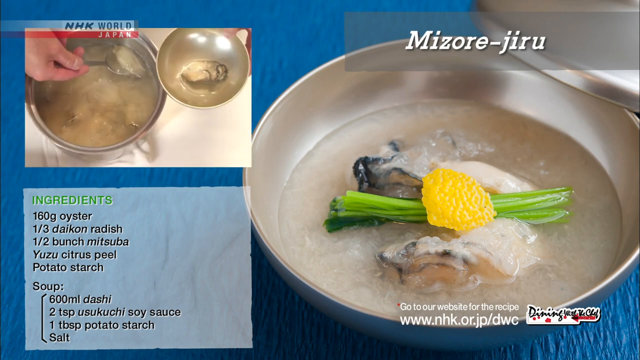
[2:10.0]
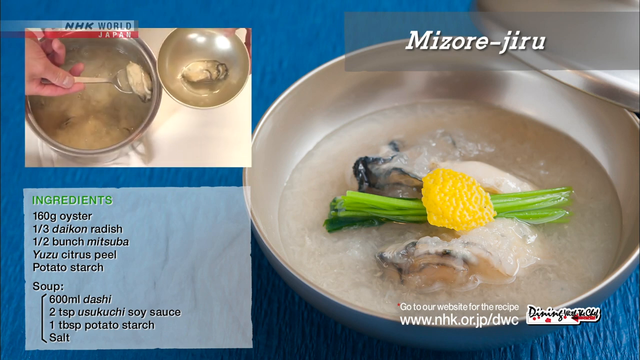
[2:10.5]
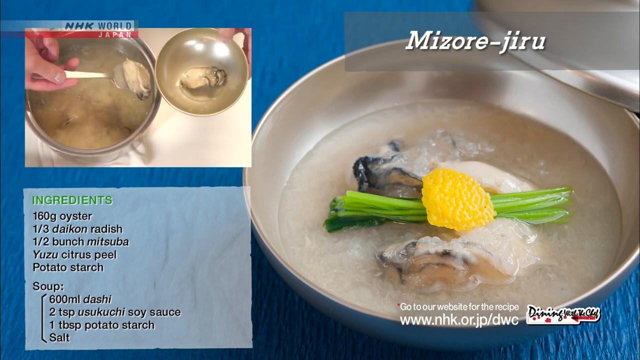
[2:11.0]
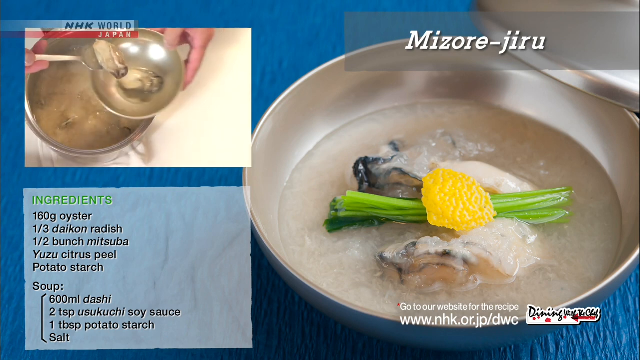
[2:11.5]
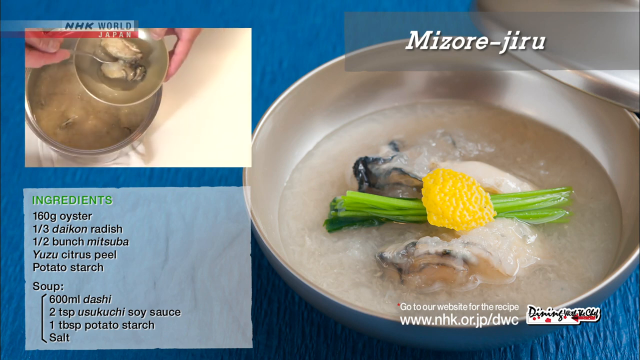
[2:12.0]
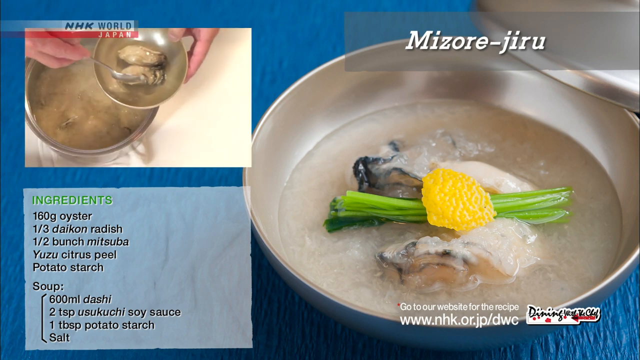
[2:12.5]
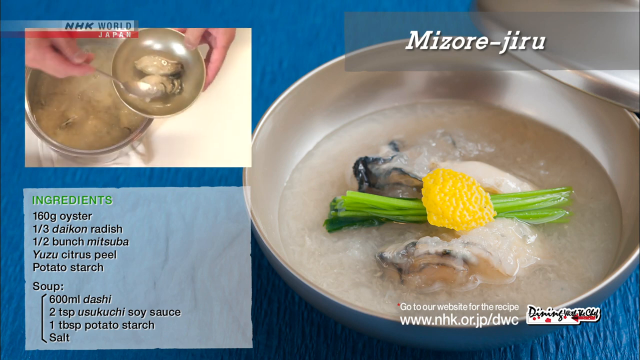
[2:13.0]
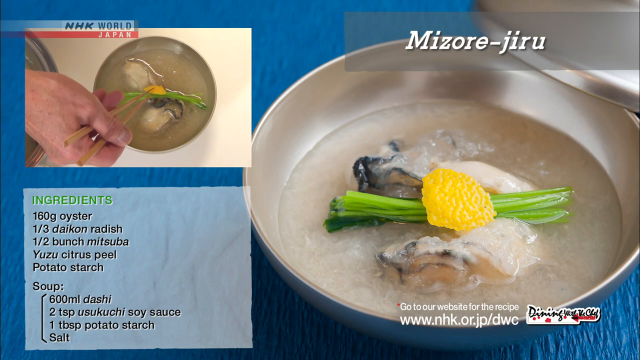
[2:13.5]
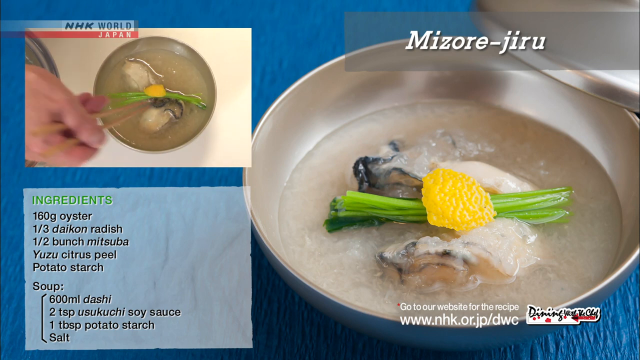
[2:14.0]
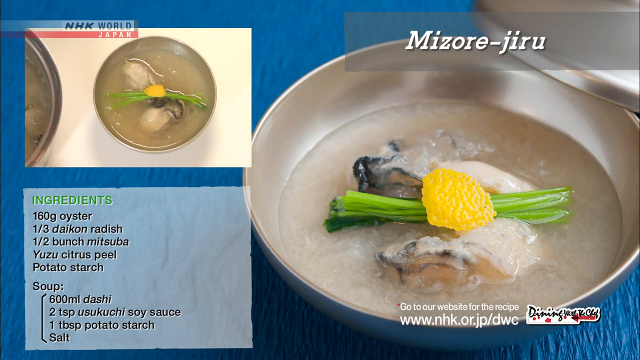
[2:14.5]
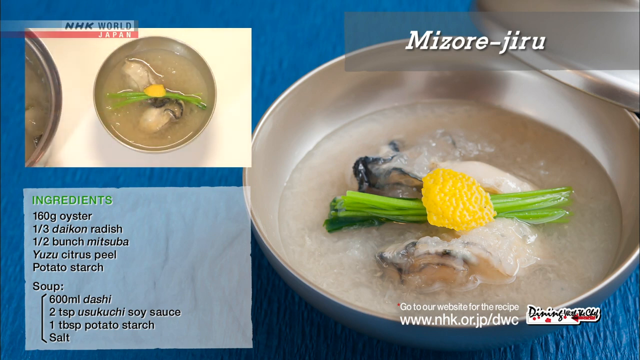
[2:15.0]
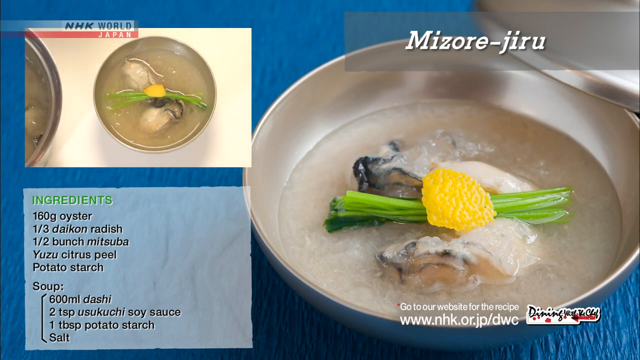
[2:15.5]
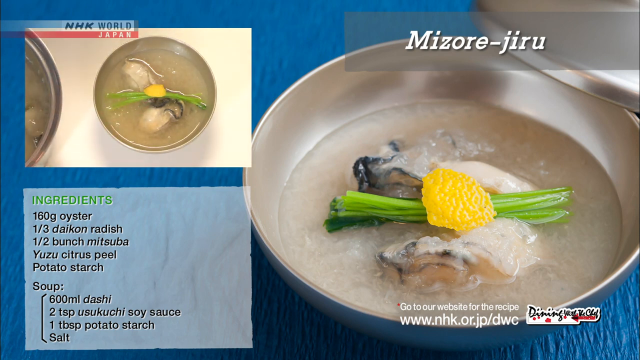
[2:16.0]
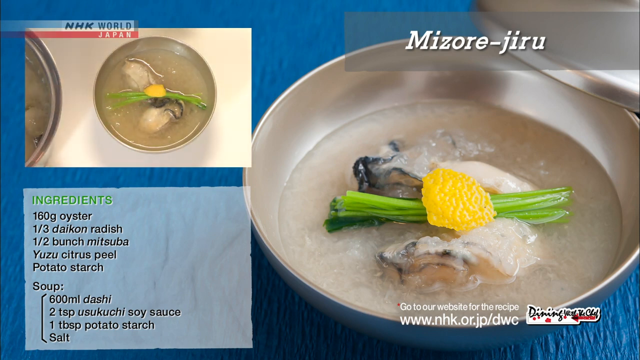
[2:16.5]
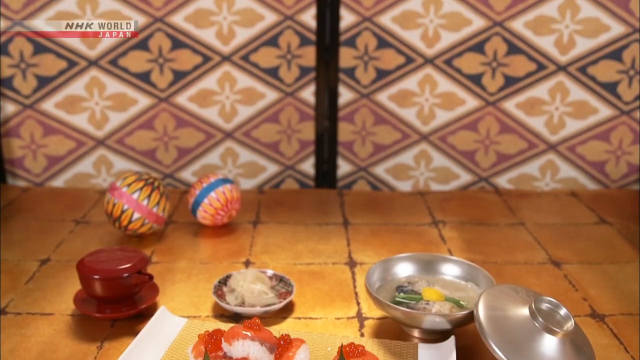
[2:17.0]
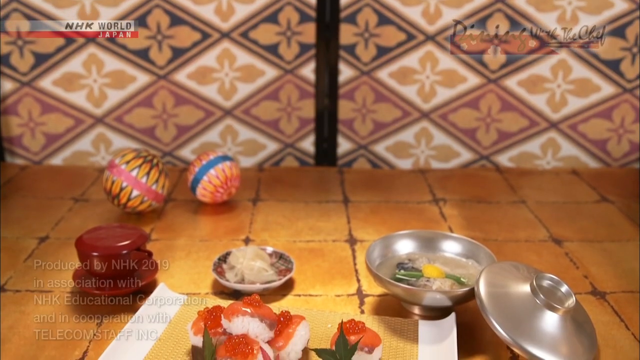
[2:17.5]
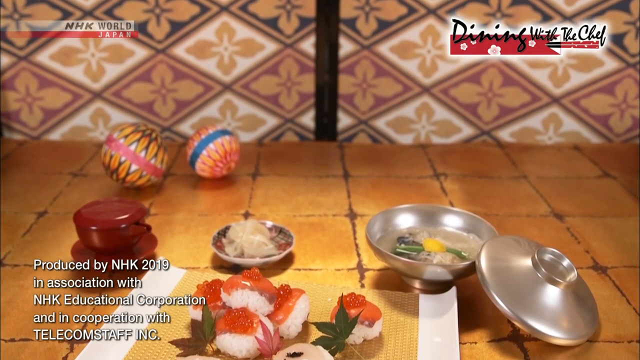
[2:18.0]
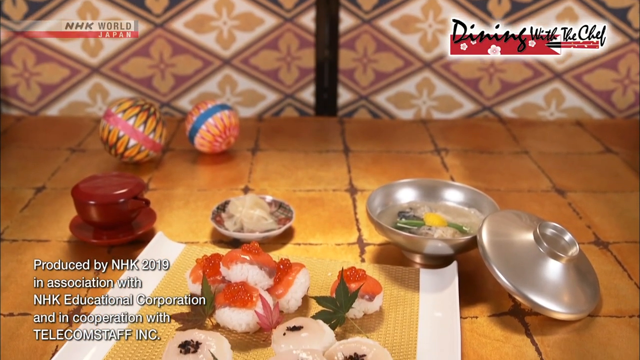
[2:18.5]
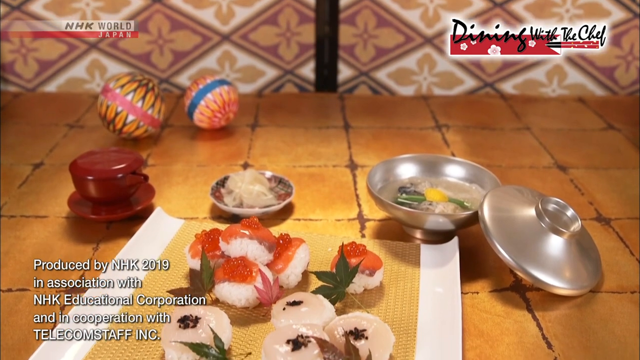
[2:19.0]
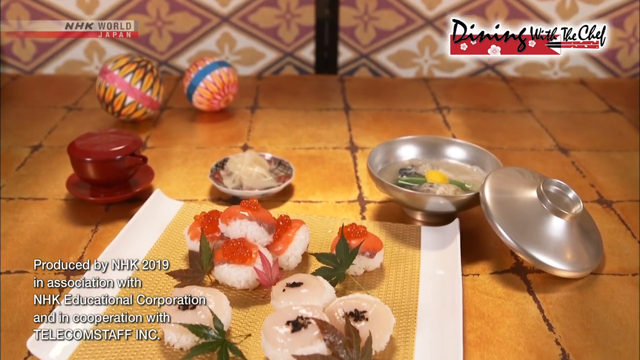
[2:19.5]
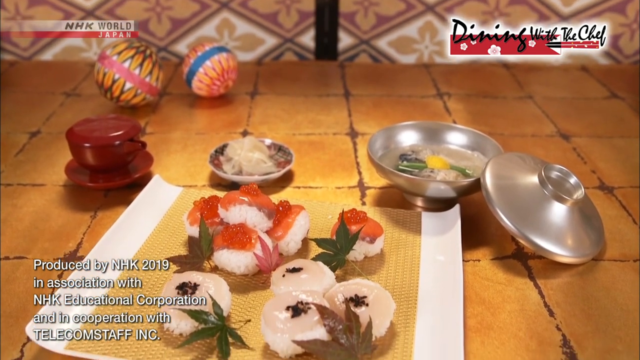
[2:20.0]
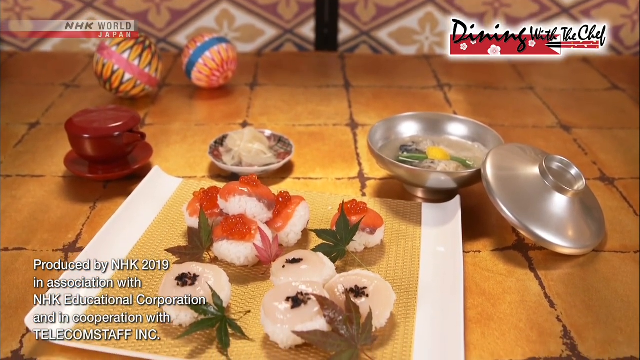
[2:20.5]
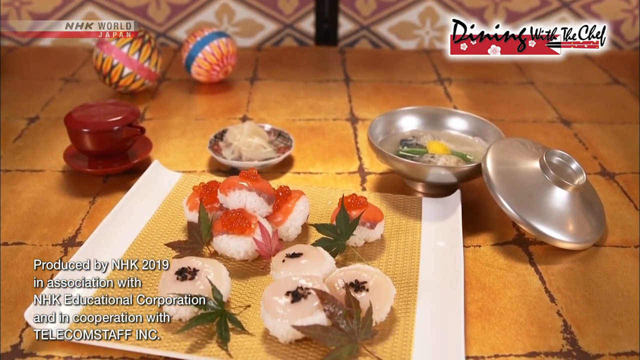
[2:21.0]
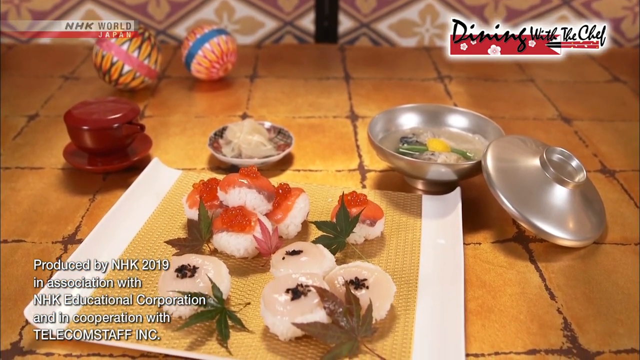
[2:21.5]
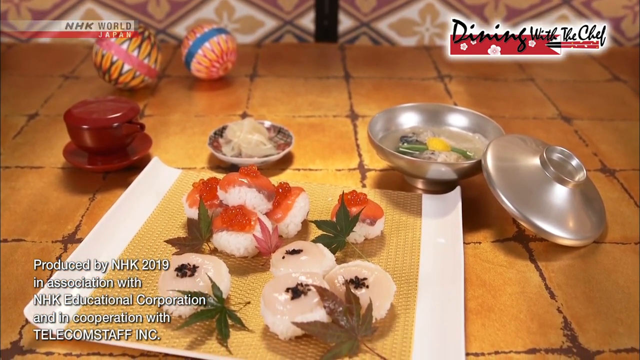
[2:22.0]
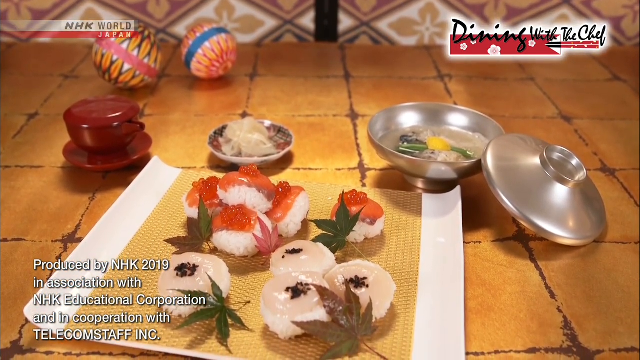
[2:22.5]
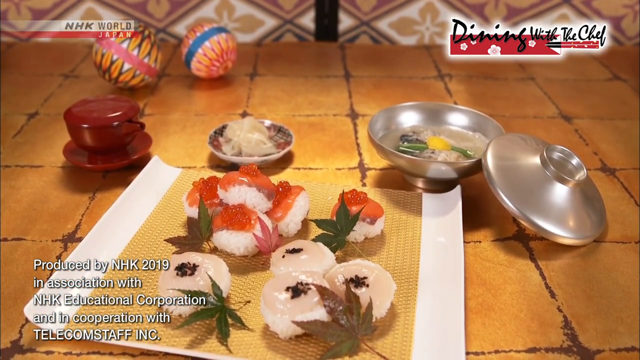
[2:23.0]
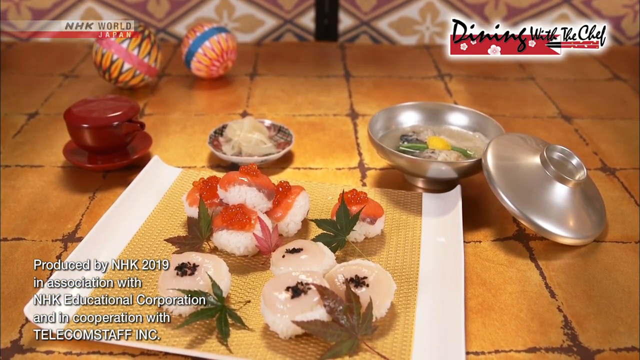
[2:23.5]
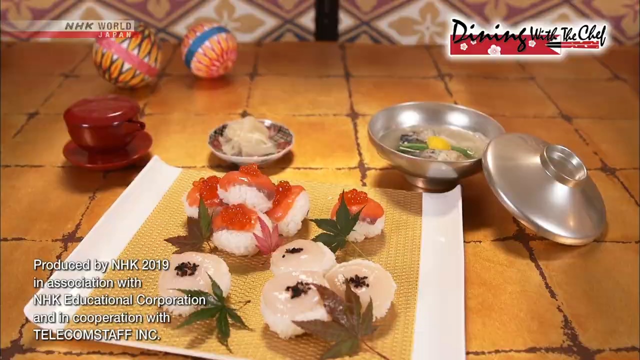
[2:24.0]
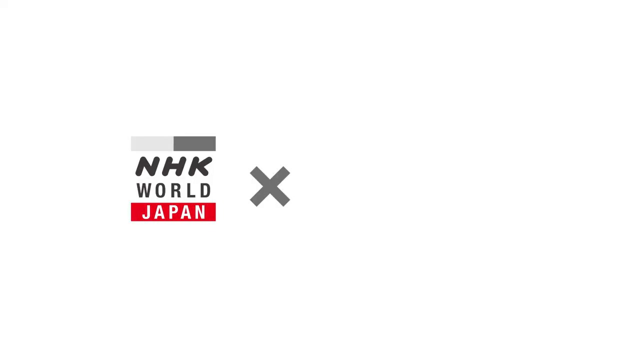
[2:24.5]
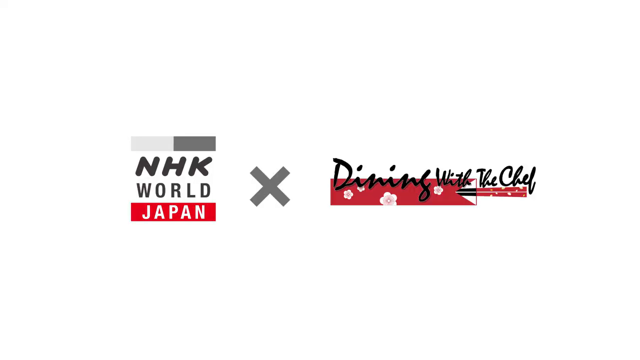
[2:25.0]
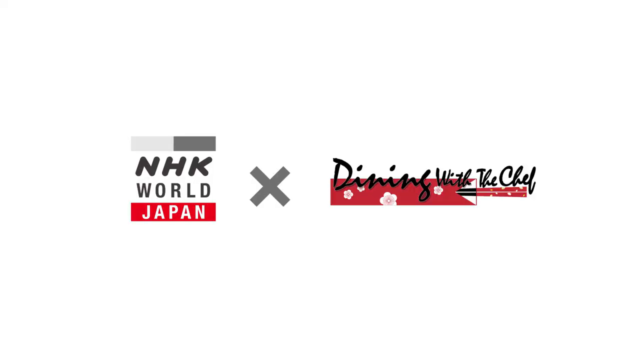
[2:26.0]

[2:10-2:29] The bowl of miso or jiro remains on the right-hand side of the screen. On the bottom left-hand side is an ingredient list: 160 grams of oyster, 1 third of a daikon radish, half a bunch of mitsuba, yuzu citrus peel, and potato starch; the soup base requires 60 milliliters of dashi, 2 teaspoons of usukuchi soy sauce, 1 tablespoon of potato starch, and salt. The video at the top left of the screen shows the chef finishing the soup. He spoons oysters onto the bottom of a bowl and adds some broth, then adds the blanched grains on top of the oyster along with some of the citrus peel. The scene then switches to show the entire meal together, including the sushi and the soup. In the top right-hand corner is text that says "Dining with the Chef," and on the left-hand side of the screen the banner that says "NHK World, Japan" is still there.